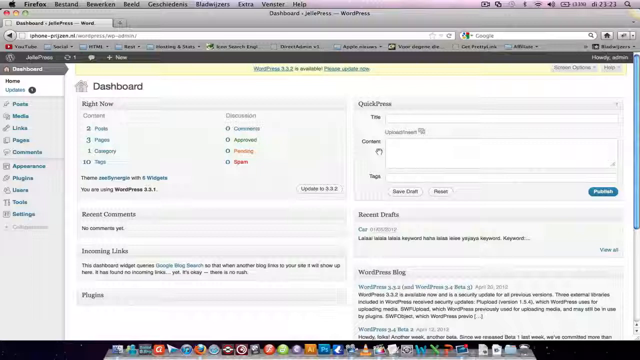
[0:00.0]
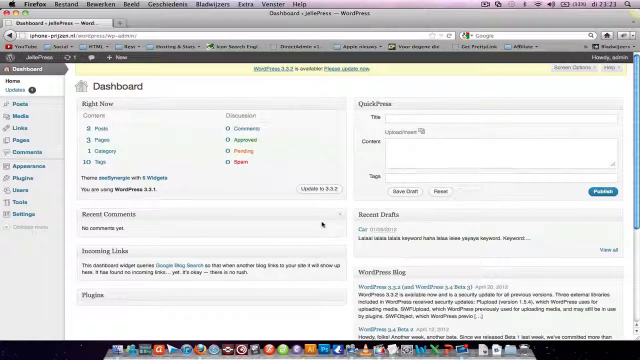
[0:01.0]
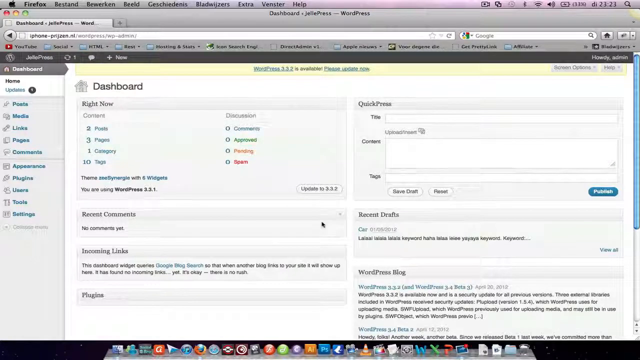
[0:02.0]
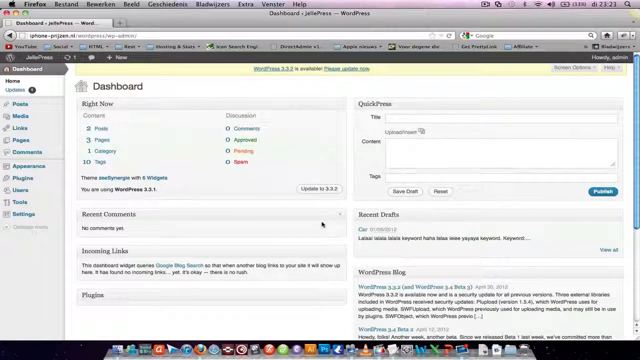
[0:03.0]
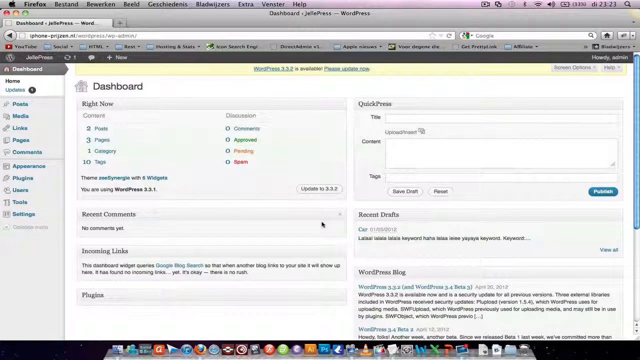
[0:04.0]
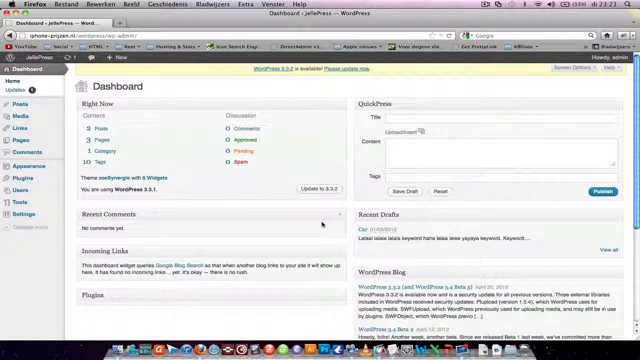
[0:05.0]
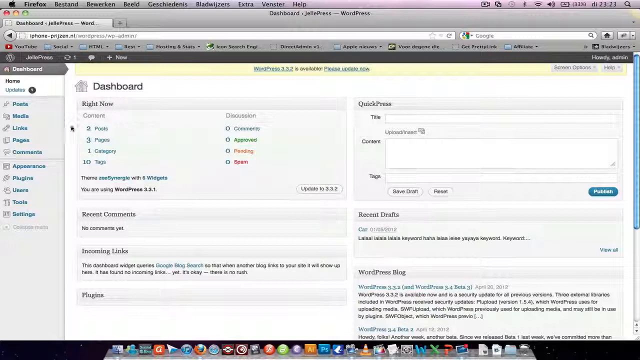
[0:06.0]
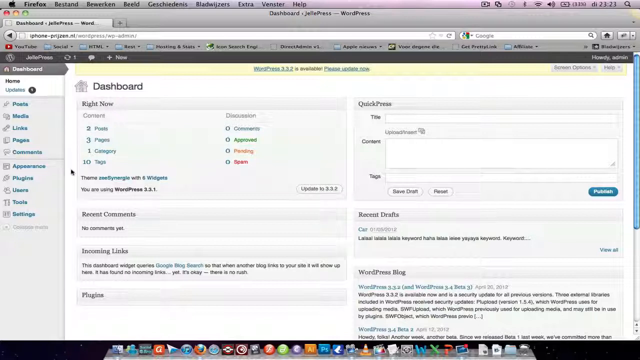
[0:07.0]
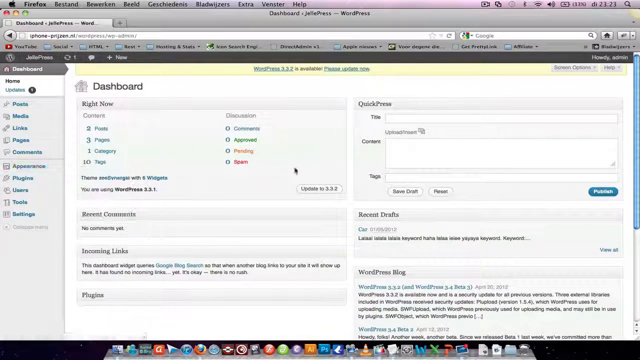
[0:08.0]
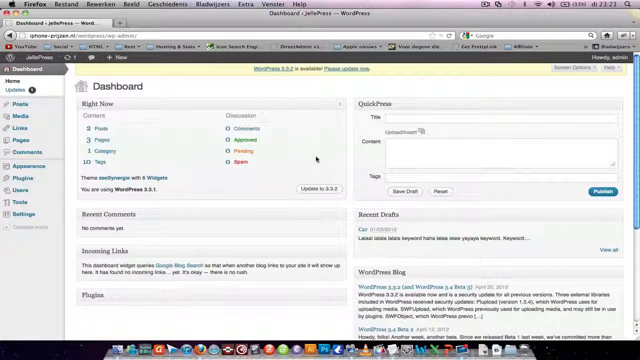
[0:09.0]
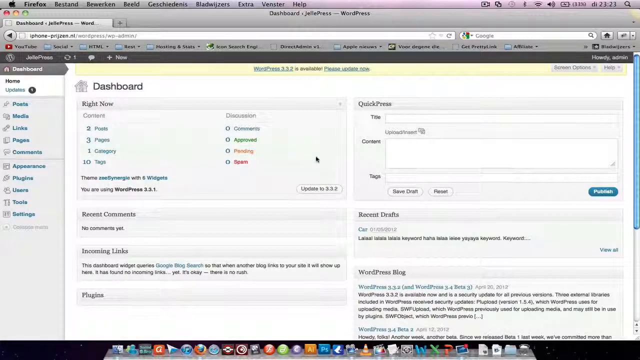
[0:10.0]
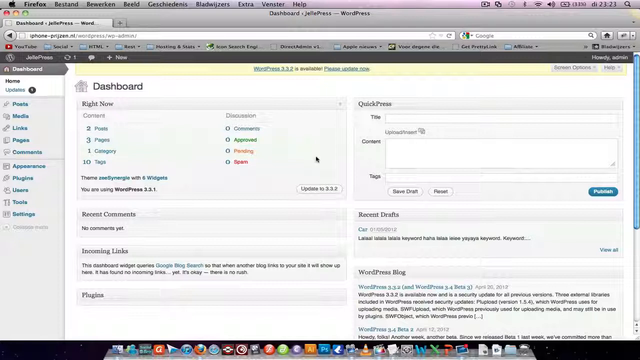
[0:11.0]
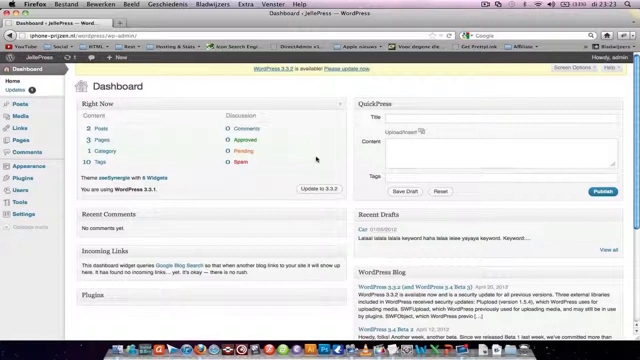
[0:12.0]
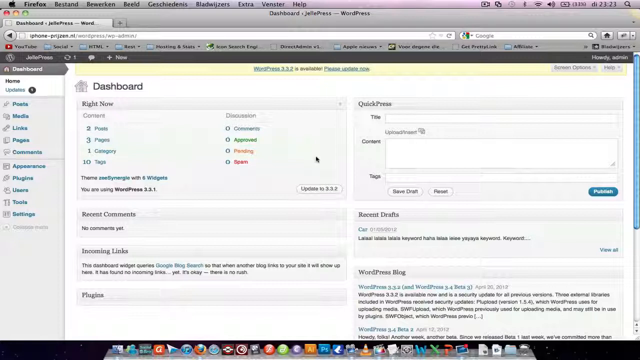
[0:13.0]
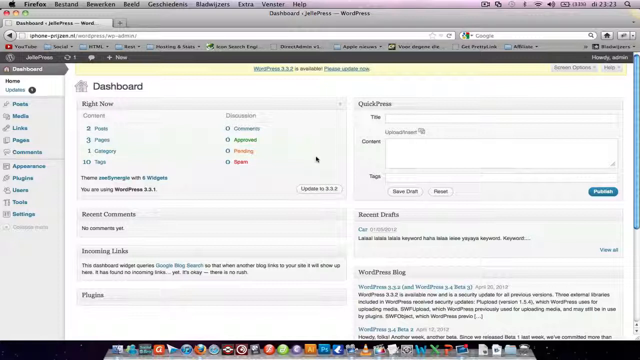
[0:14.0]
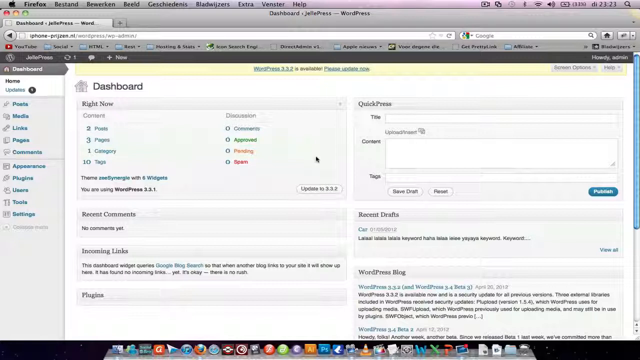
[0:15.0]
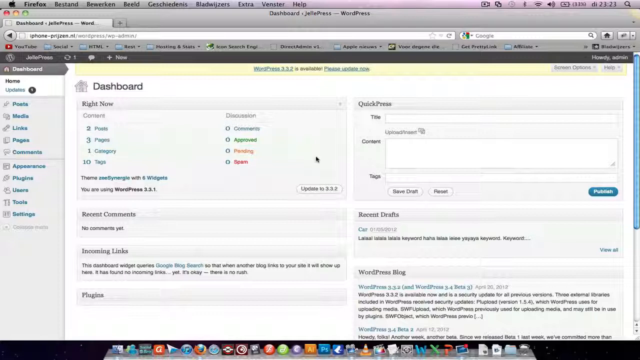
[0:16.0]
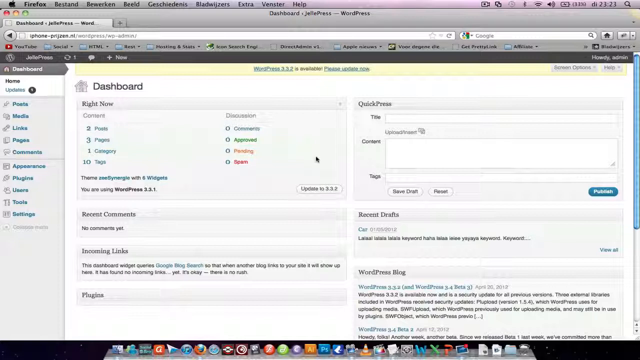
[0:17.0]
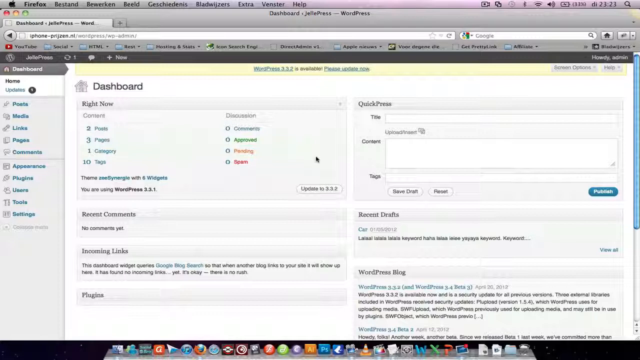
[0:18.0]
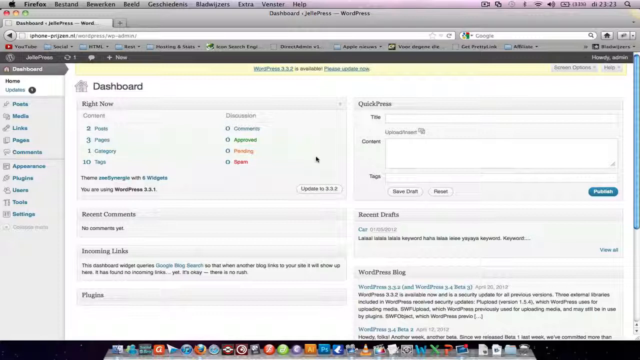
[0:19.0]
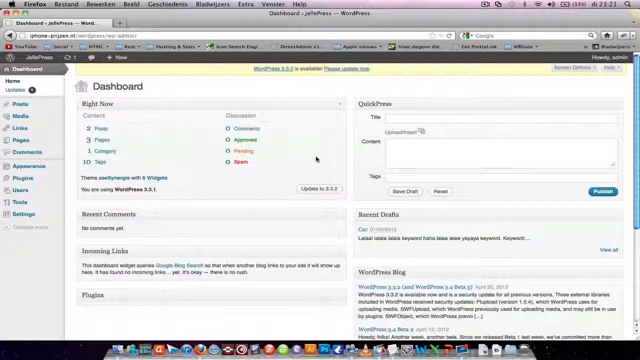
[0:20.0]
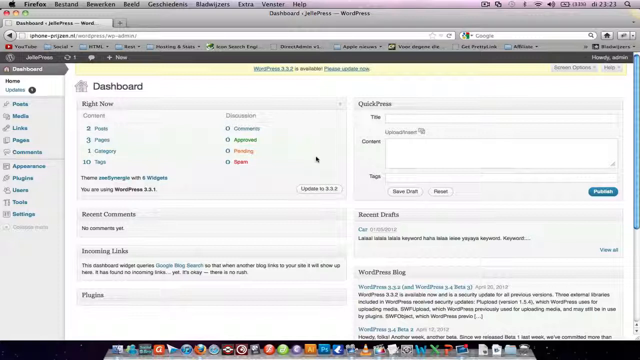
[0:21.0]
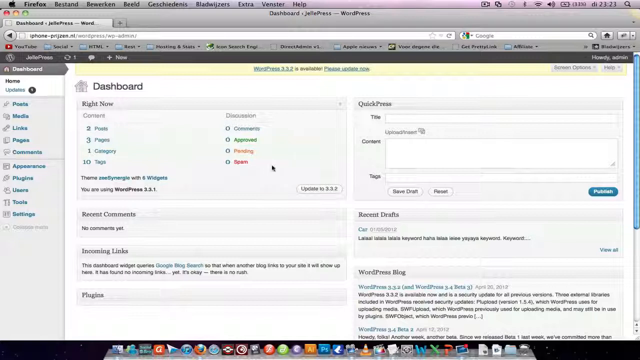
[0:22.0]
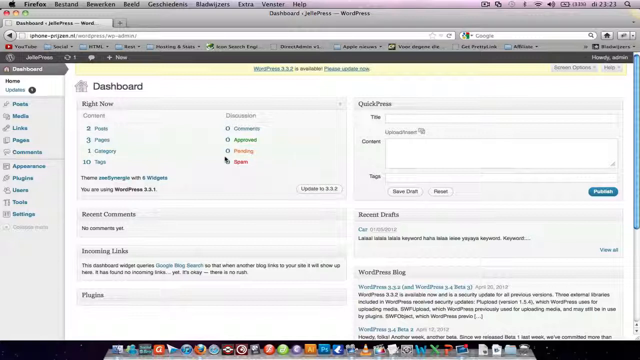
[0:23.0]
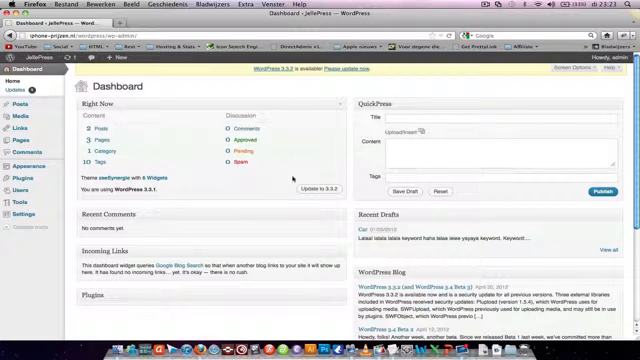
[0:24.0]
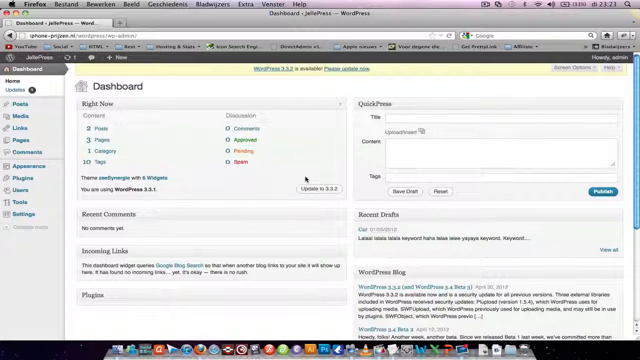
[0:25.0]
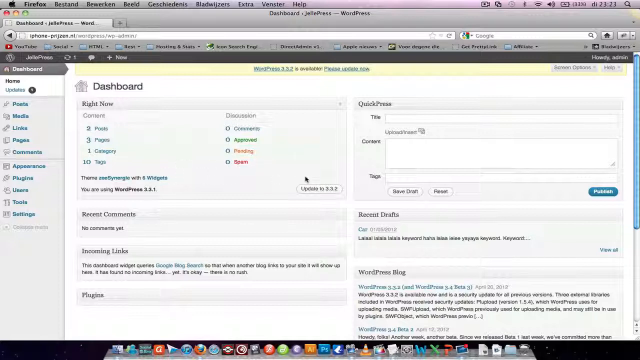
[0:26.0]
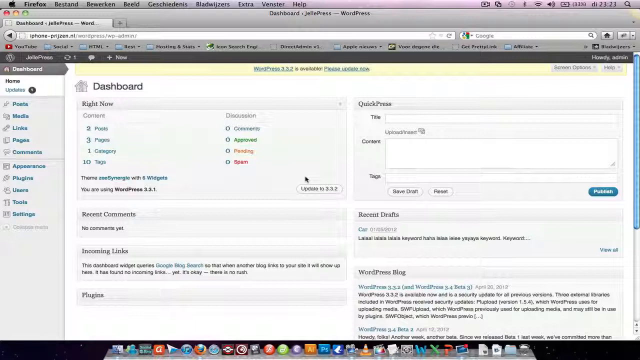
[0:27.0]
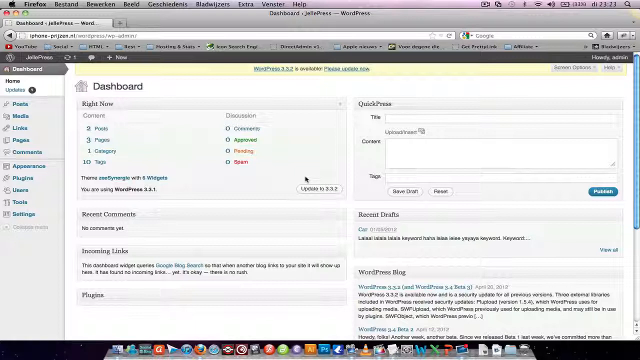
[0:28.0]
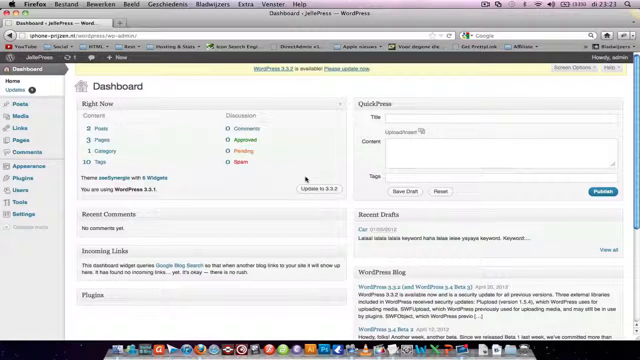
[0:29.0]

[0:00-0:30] A mouse cursor moves, not in any particular direction, over what looks like a web page on an Apple computer. The page appears to be a WordPress dashboard belonging to someone called Jelle Press. At the top, a yellow banner says "WordPress 3.3.2 is available. Please update now.", with "Please update now" in blue. On the dashboard, where the cursor is, "content" is on one side and "discussion" on the other. Under content are "two posts", then "three pages", then "one category", then "10 tags". Under discussion are "zero comments", "zero approved", "zero pending" and "zero spam". Below content and discussion it says "theme zeesynergie with six widgets", and below that, "you are using WordPress 3.3.1".